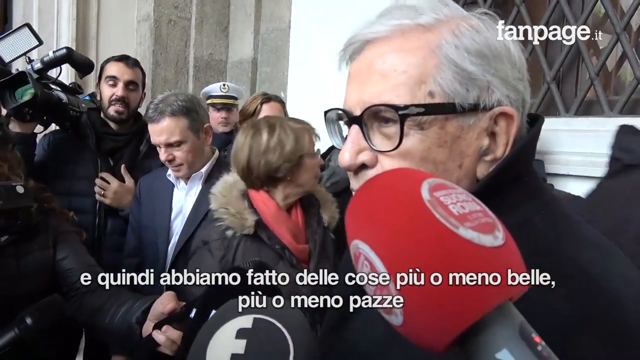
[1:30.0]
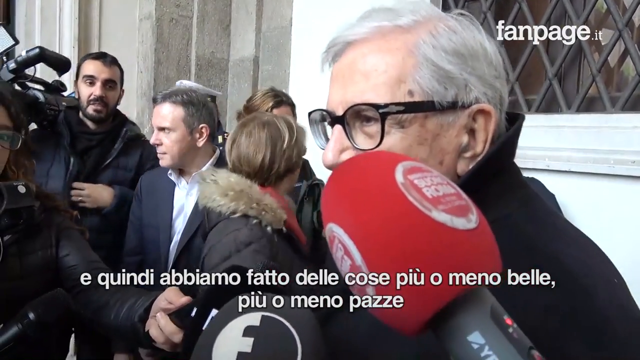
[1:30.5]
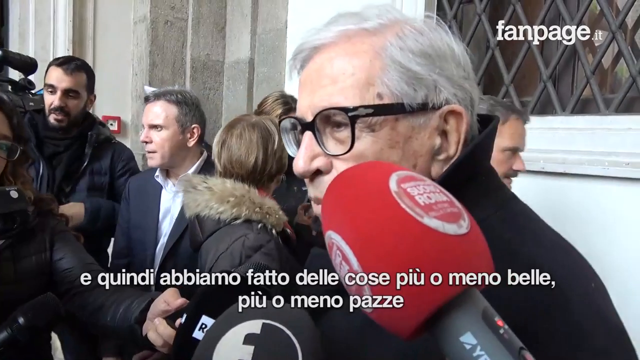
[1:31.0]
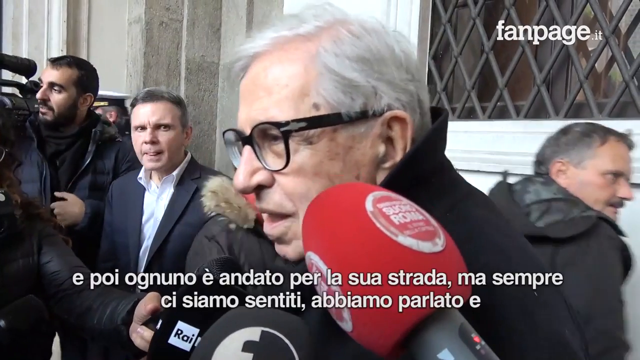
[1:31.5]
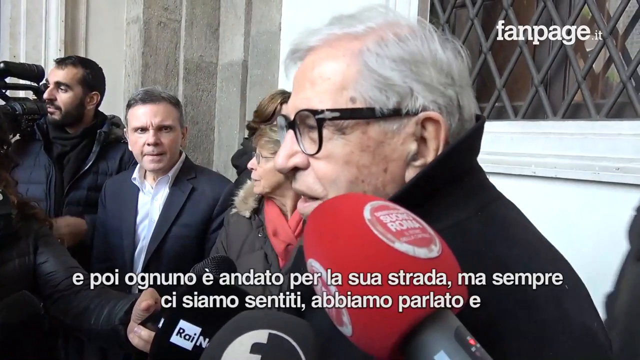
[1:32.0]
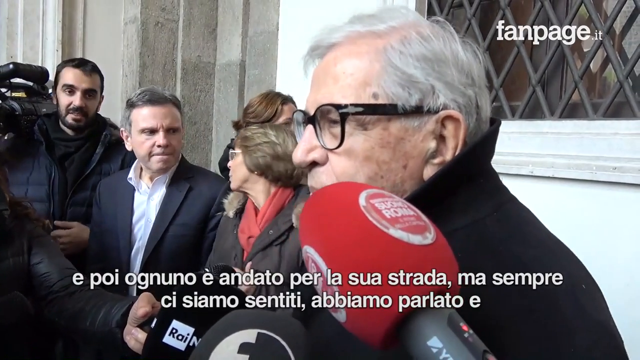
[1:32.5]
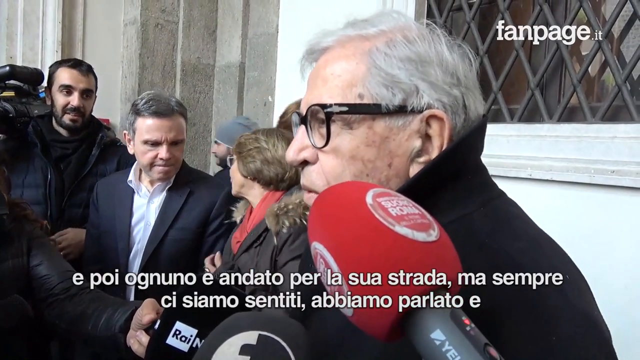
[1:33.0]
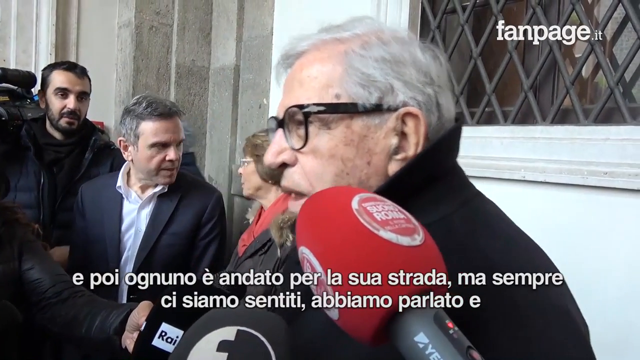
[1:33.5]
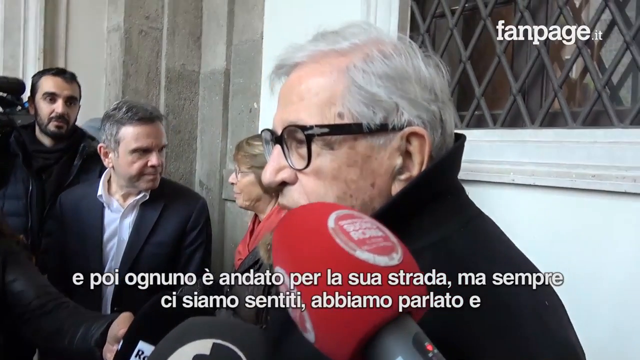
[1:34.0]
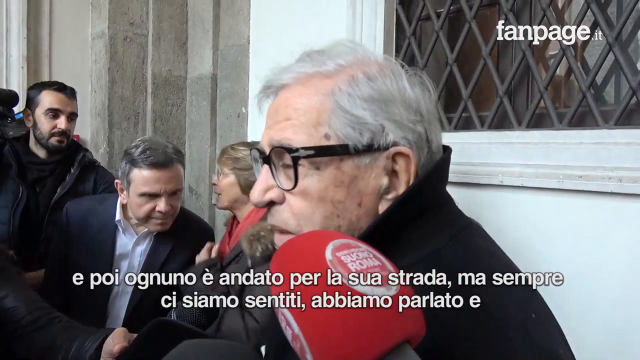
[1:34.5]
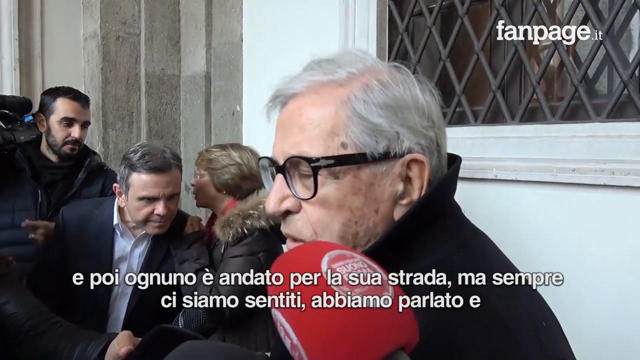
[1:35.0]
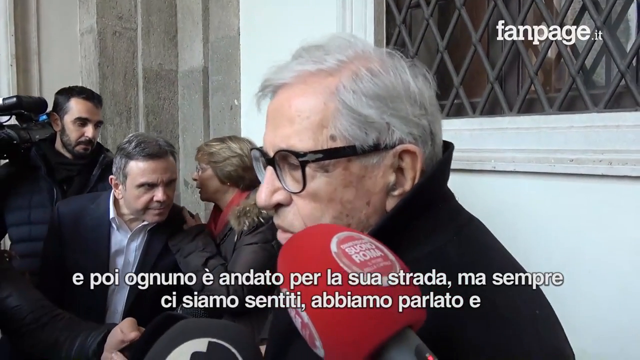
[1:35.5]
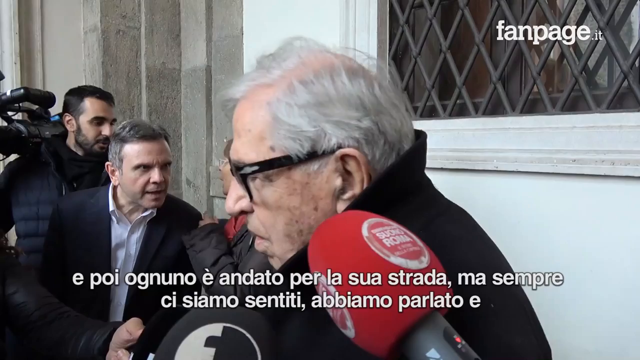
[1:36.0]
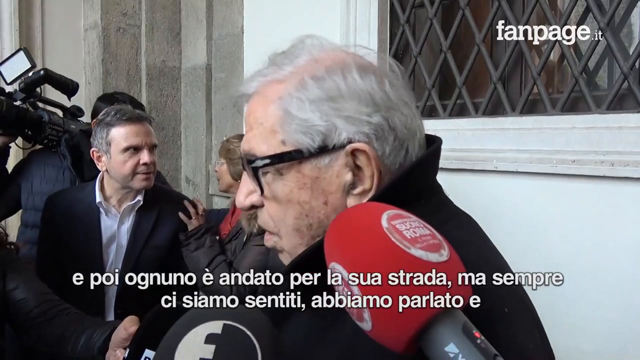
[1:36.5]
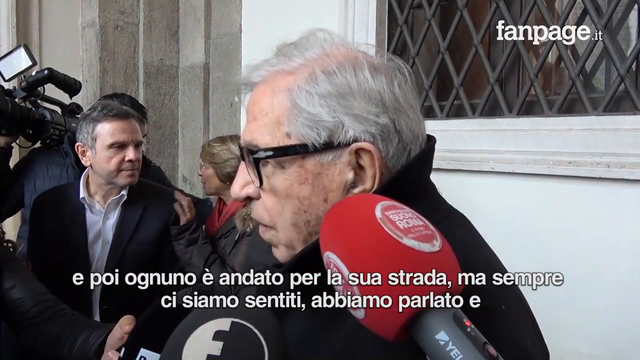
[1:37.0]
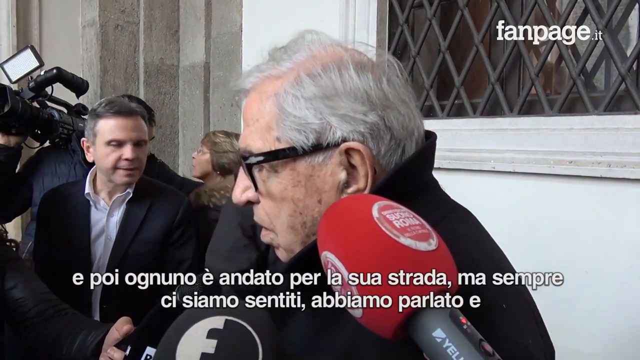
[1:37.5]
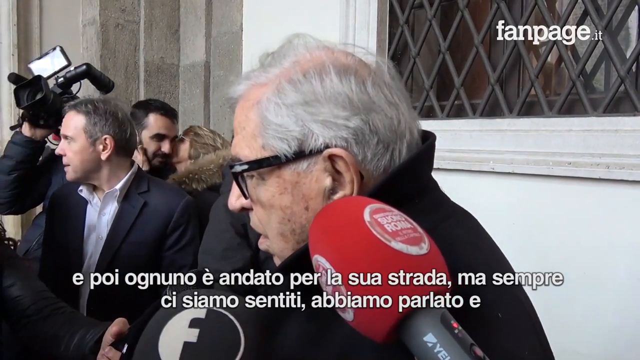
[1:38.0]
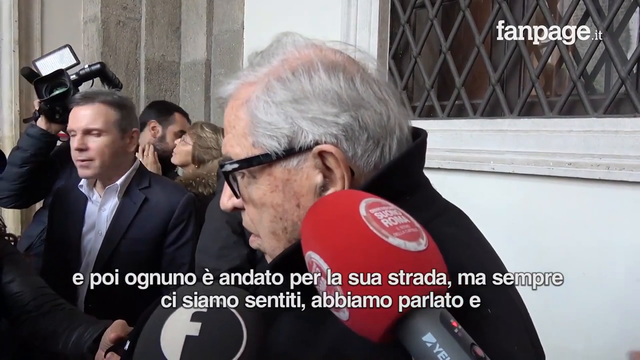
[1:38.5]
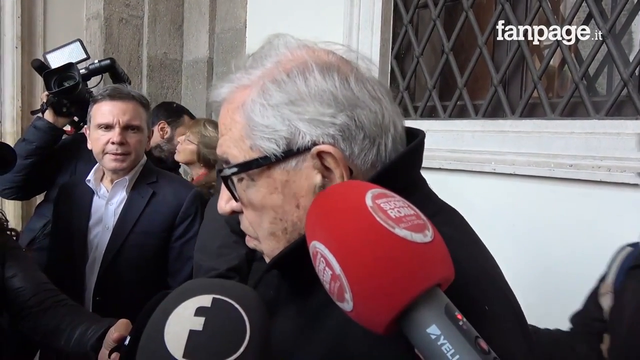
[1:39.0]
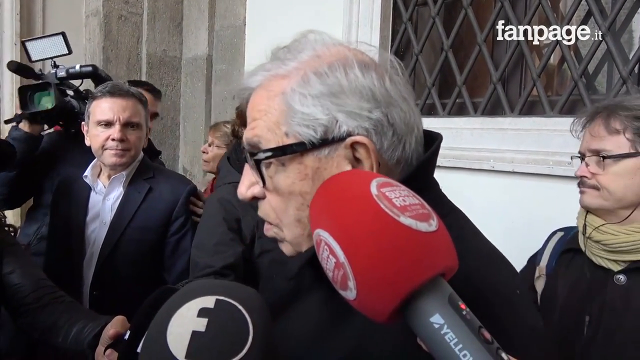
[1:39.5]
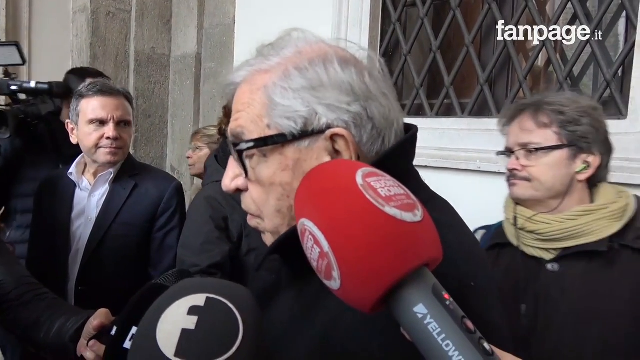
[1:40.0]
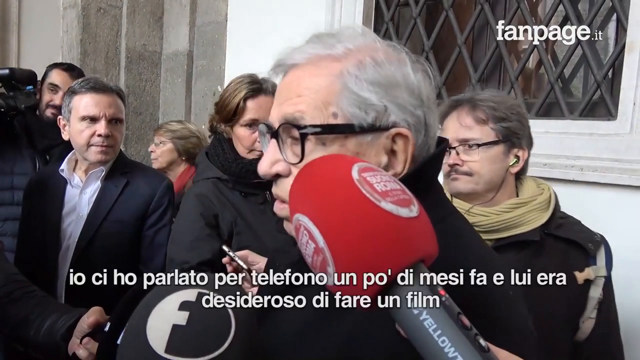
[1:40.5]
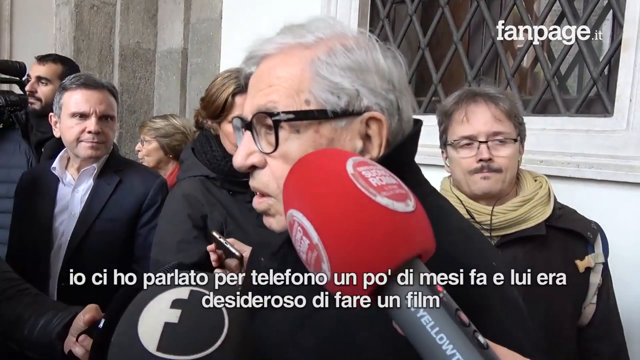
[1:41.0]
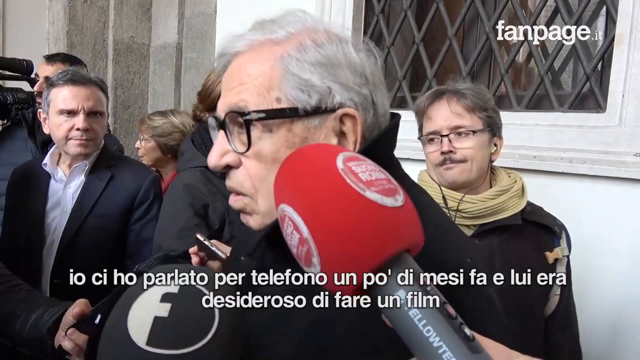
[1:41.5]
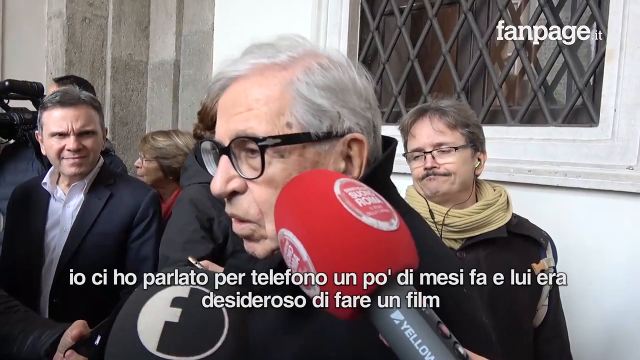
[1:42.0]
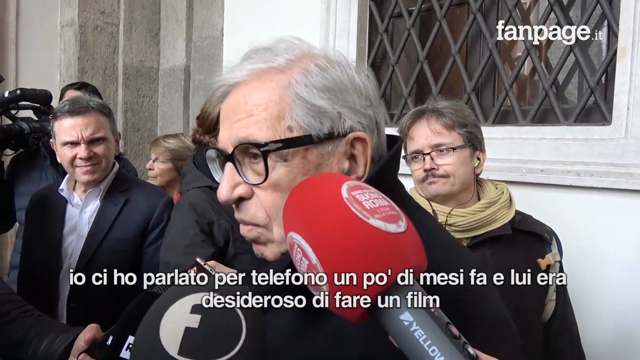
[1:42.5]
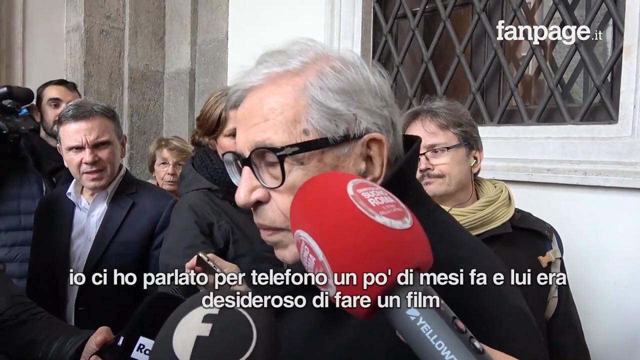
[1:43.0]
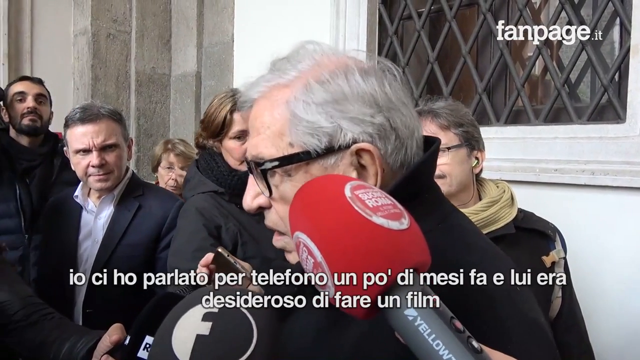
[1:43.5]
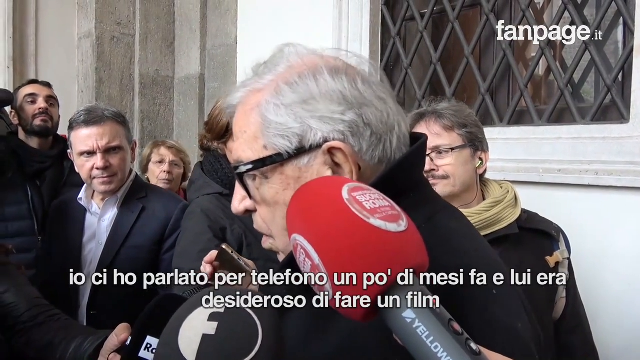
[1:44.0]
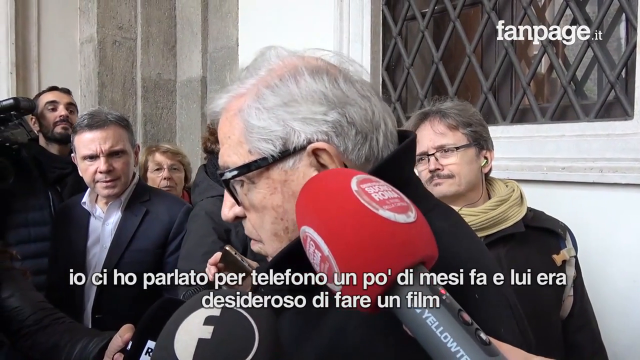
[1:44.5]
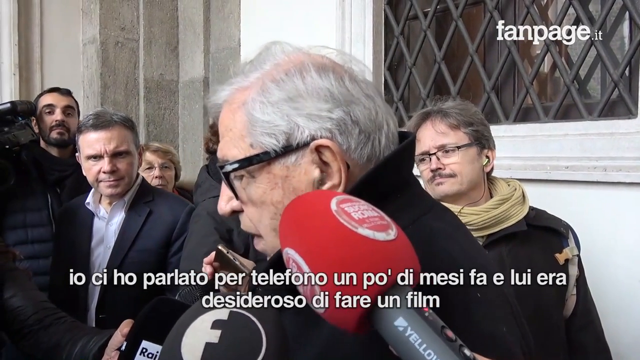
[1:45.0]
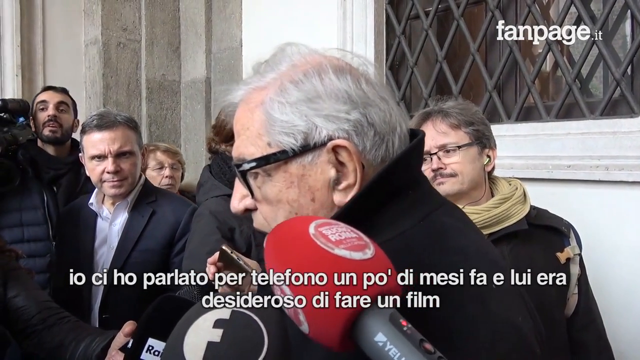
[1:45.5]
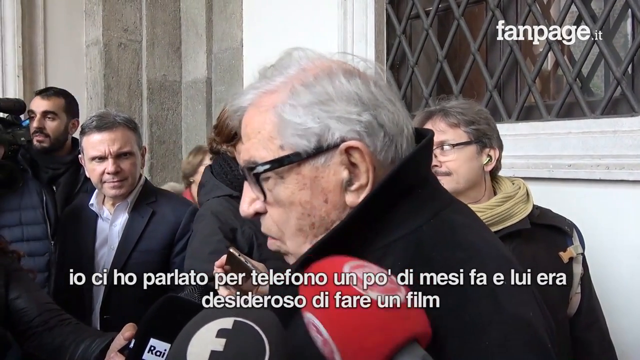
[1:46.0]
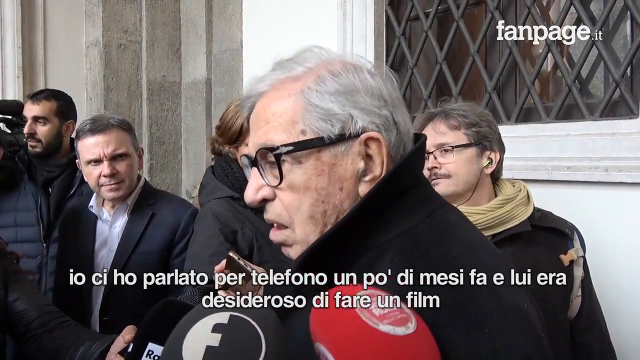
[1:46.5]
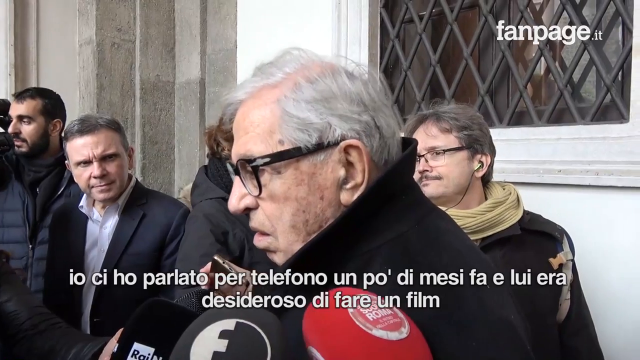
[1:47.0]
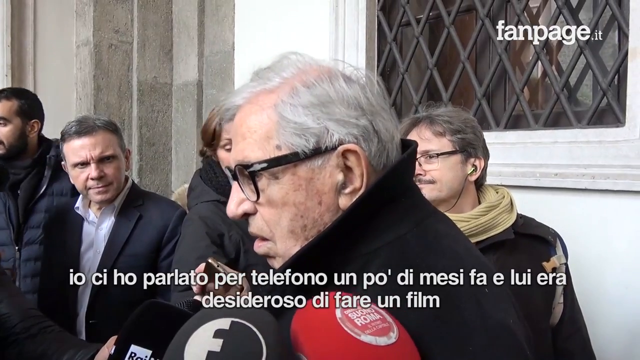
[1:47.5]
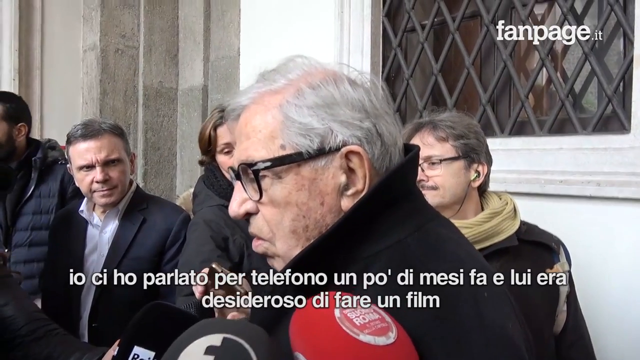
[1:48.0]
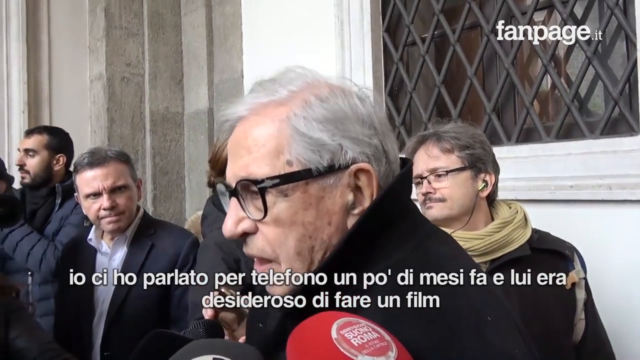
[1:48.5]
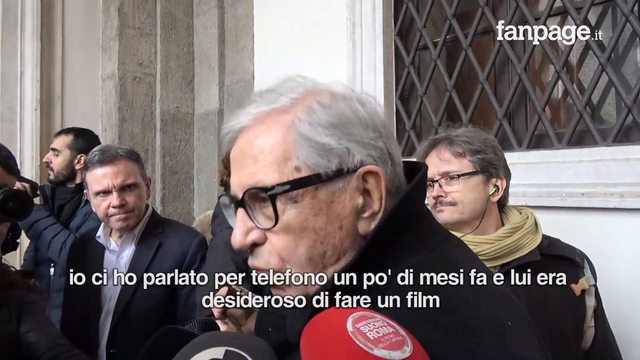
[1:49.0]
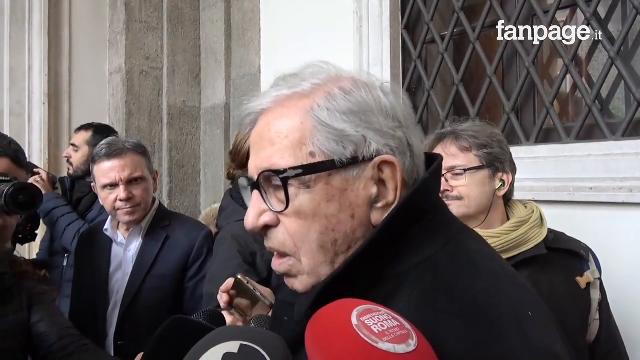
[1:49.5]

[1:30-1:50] The same old man continues; he is not very expressive but fidgets a lot. There is more activity in the background: a woman in a fur coat and the cameraman kiss each other on the cheek, and the other reporters line up and record the man's speech. The crowd behind him is of mixed gender, with most appearing over 30, mostly mid-40s and up. Only one cameraman is visible; the rest hold mics or record with their cell phones.